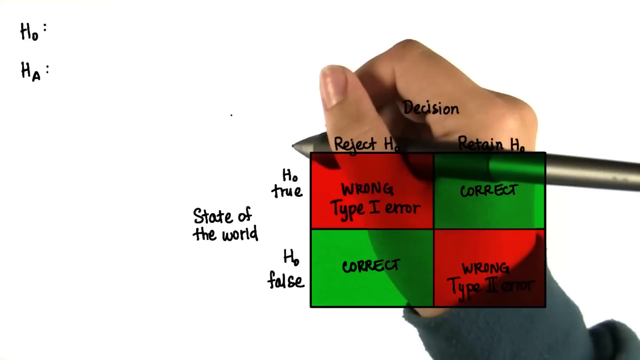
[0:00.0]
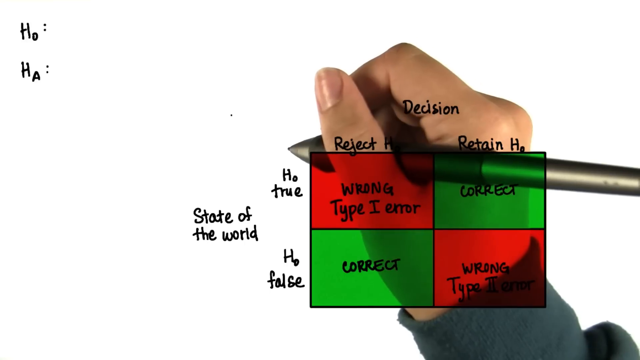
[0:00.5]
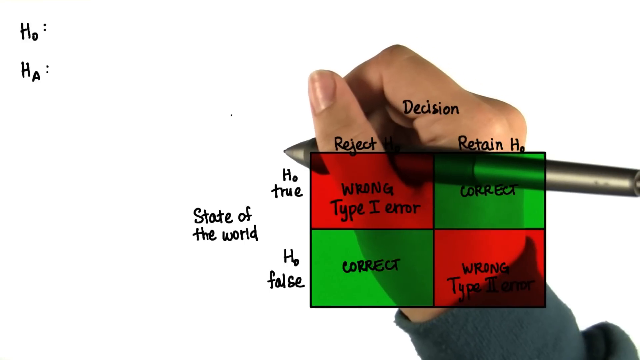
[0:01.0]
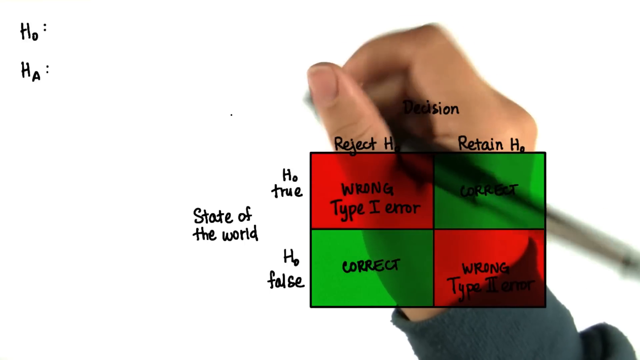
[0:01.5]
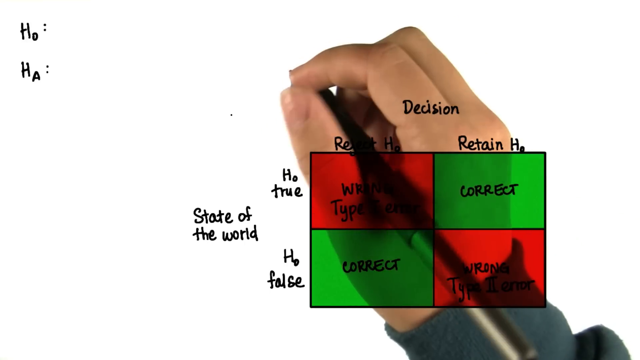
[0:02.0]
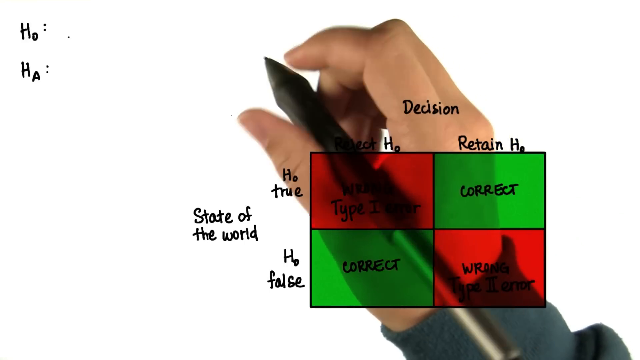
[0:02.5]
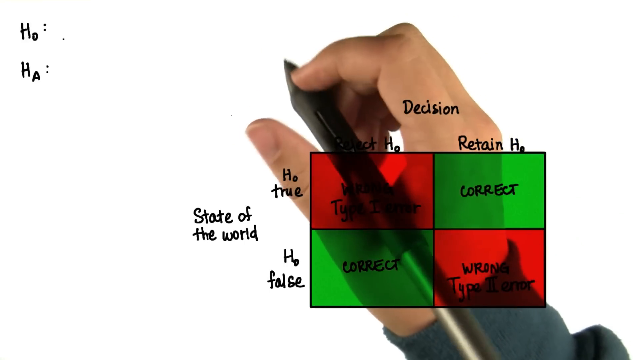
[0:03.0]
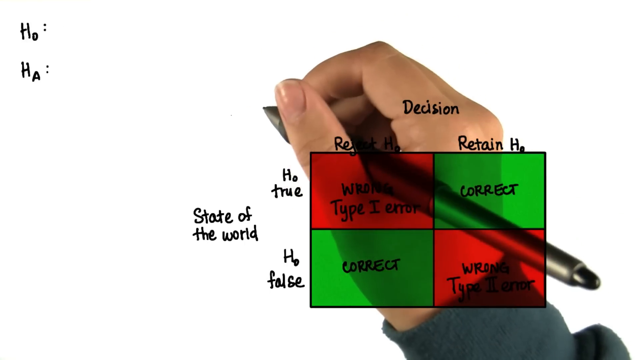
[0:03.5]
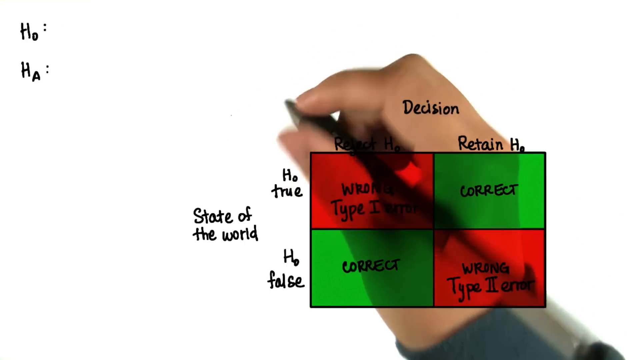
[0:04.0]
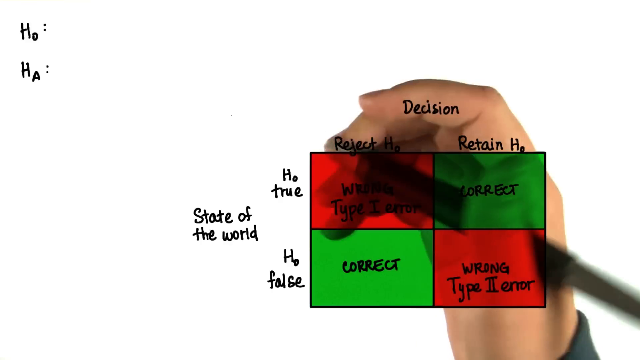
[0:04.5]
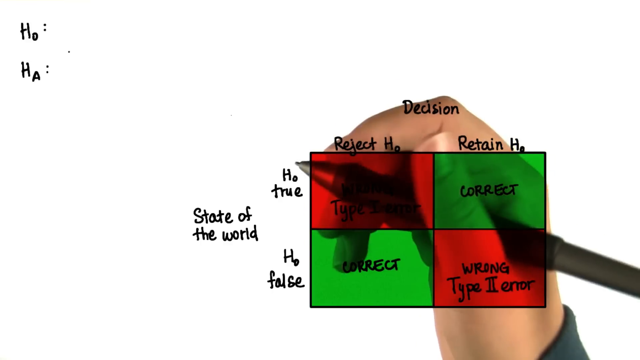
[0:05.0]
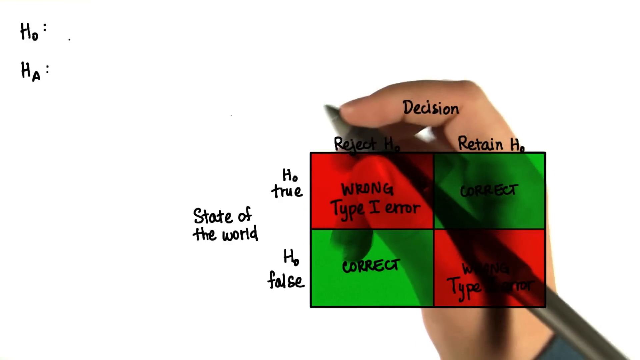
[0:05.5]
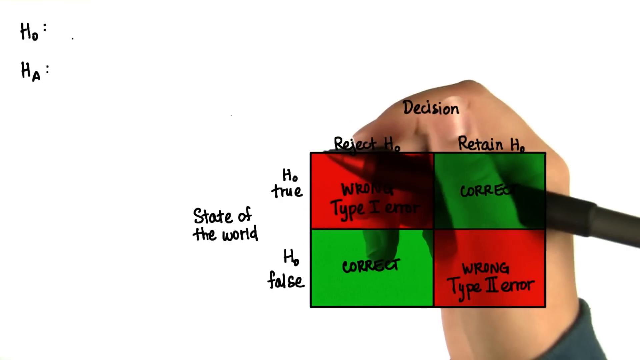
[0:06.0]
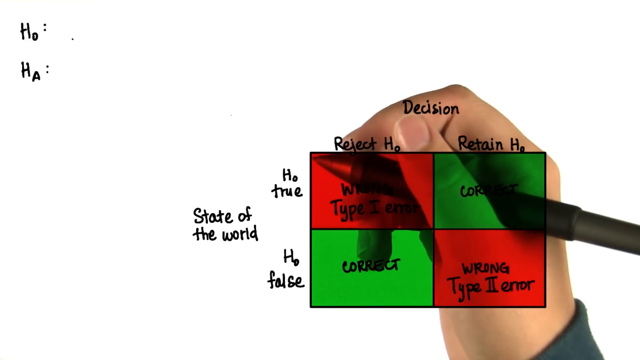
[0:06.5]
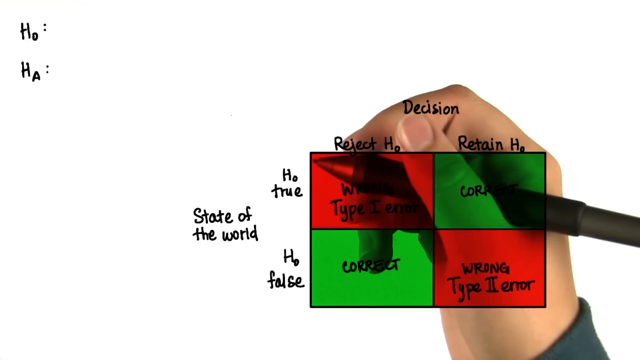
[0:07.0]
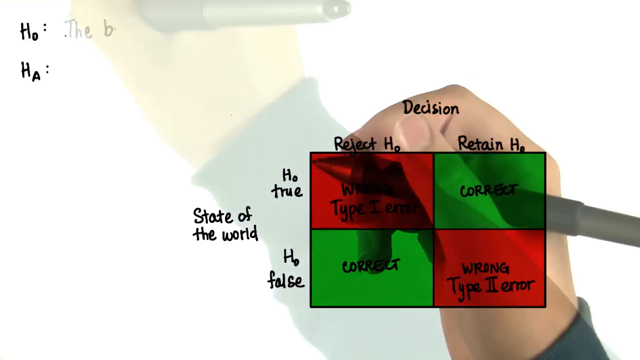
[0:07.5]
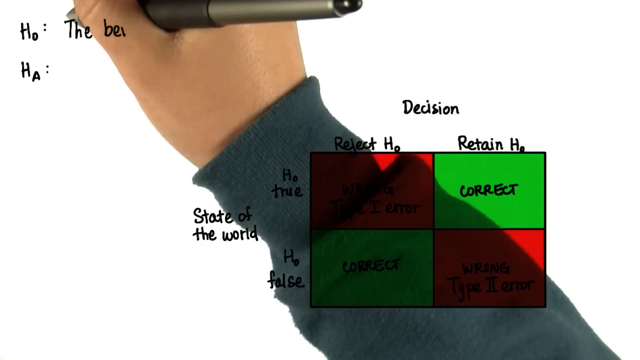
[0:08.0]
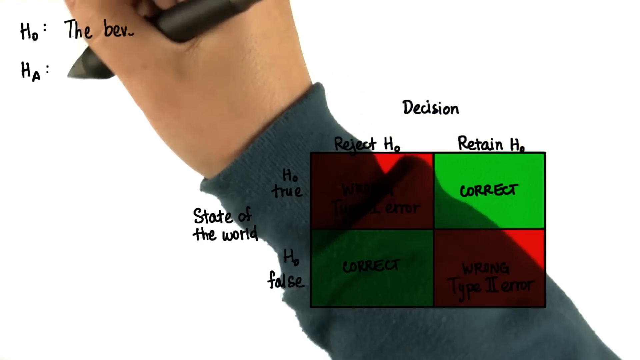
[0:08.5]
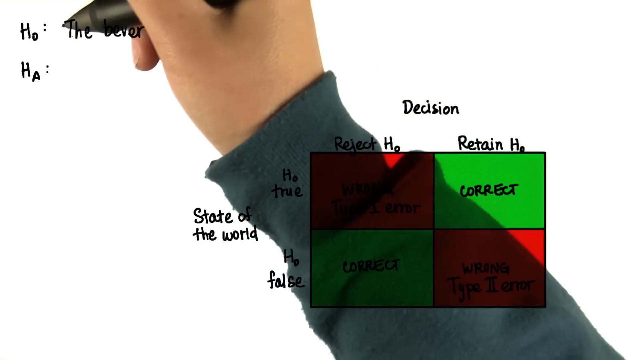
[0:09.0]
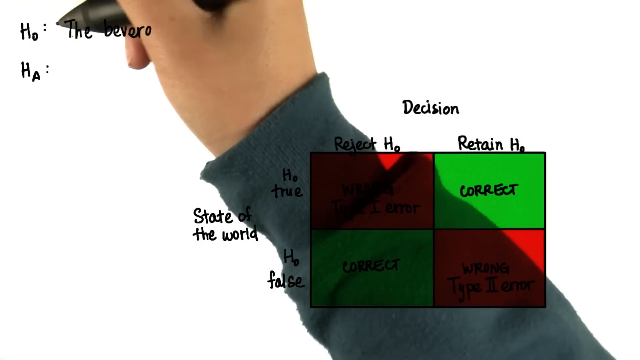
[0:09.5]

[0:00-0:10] A white screen is shown. Toward the top left-hand corner are the words "Ho" and "Ha", one line under the other. In the bottom right-hand section of the screen is a rectangular box split into four. The first section says "wrong type error" on a red background. The second section, on the right-hand side, says "correct" in green with a green background. The bottom left section says "correct" in green, and the bottom right corner of the box says "wrong type two error" in red. At the back of the box is a hand, its thumb and finger holding a pen. Next to the box on the left-hand side are the words "ho true" and "ho false", one above the other, and to the left of those it says "state of the world". The pen moves upwards, revealing the person's full arm in a grey jumper sleeve, and the hand moves to the top left-hand corner of the screen.